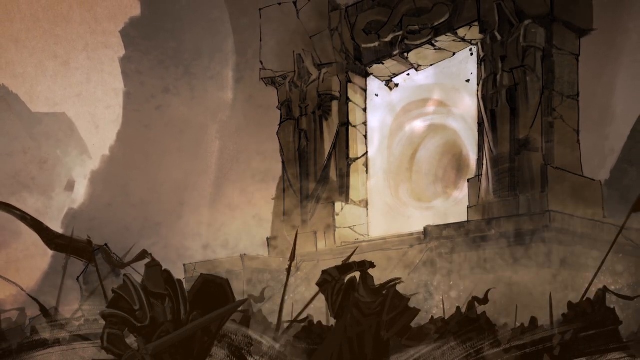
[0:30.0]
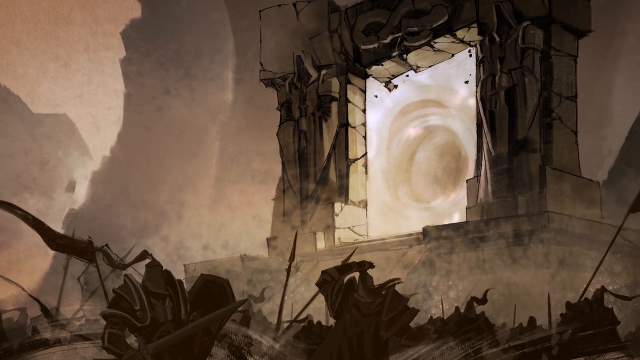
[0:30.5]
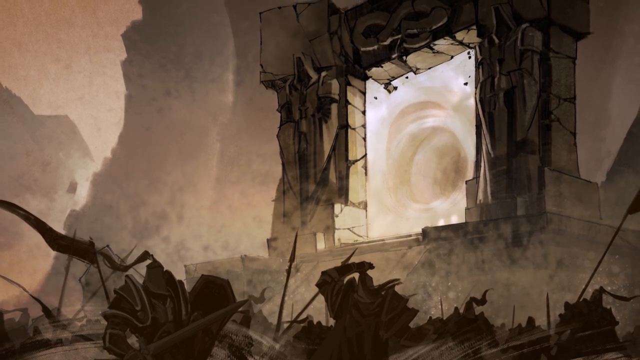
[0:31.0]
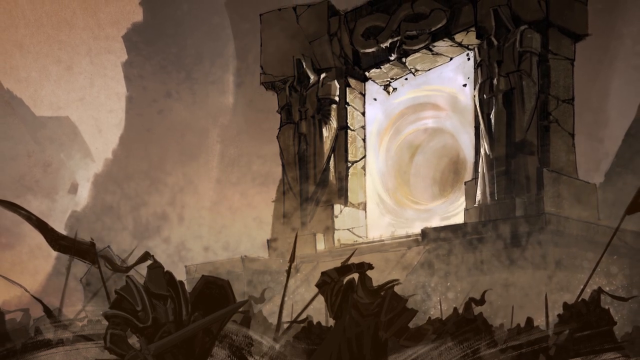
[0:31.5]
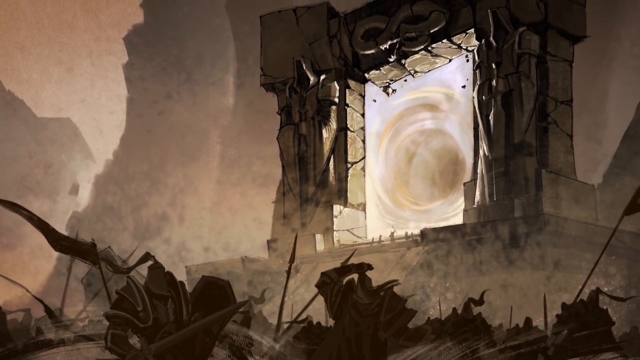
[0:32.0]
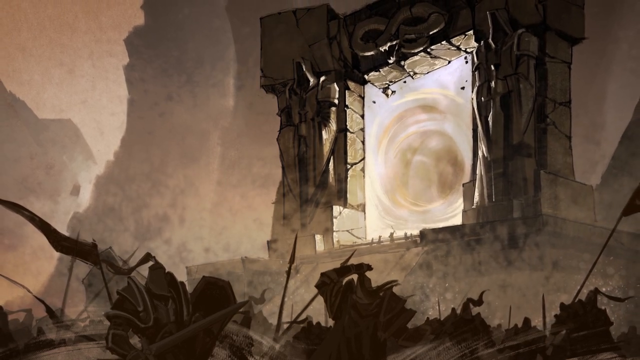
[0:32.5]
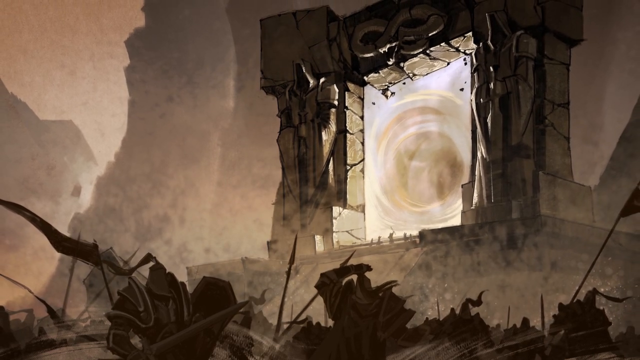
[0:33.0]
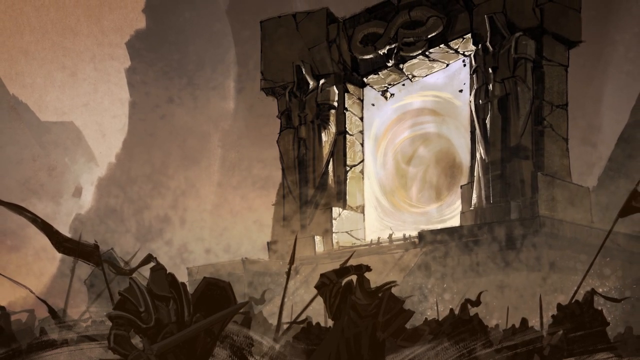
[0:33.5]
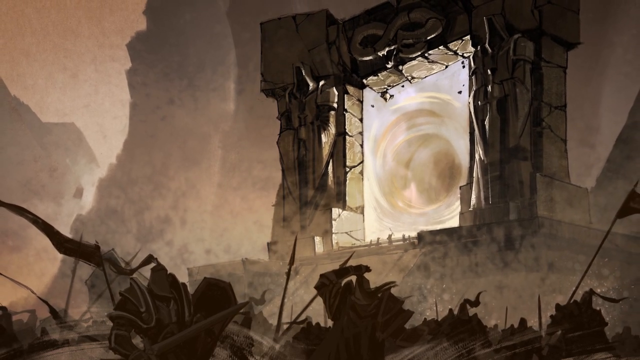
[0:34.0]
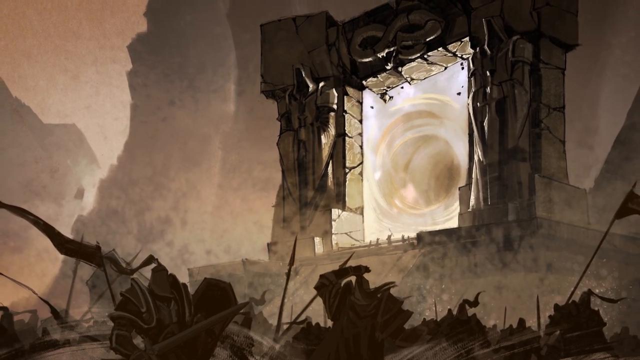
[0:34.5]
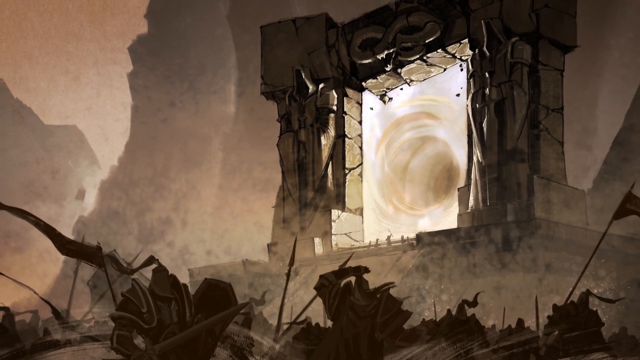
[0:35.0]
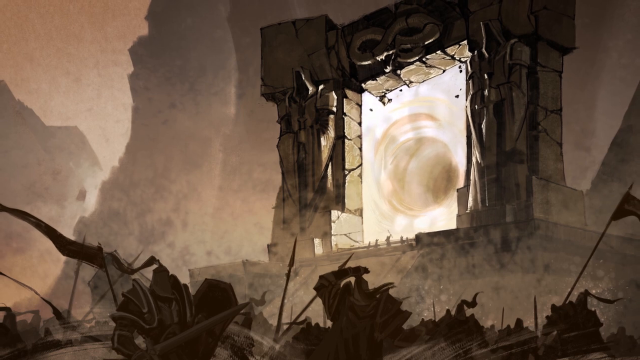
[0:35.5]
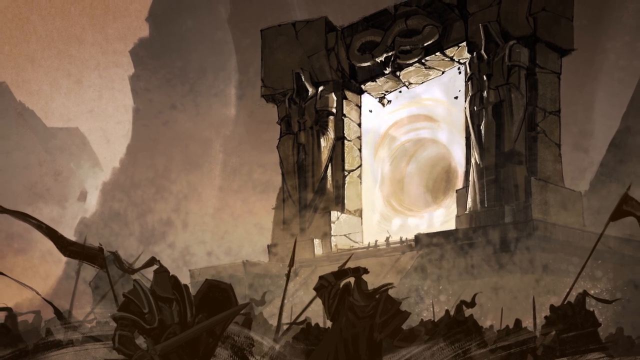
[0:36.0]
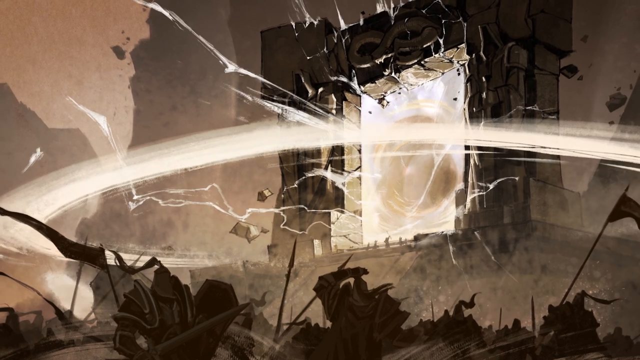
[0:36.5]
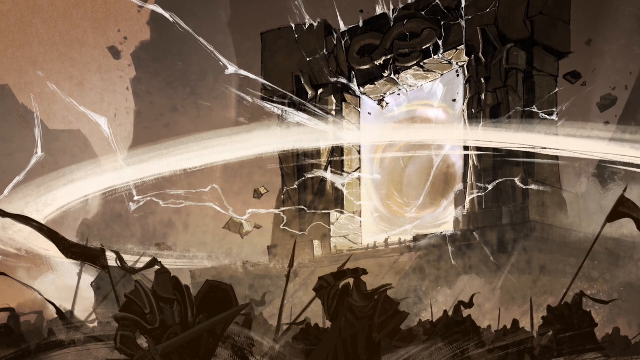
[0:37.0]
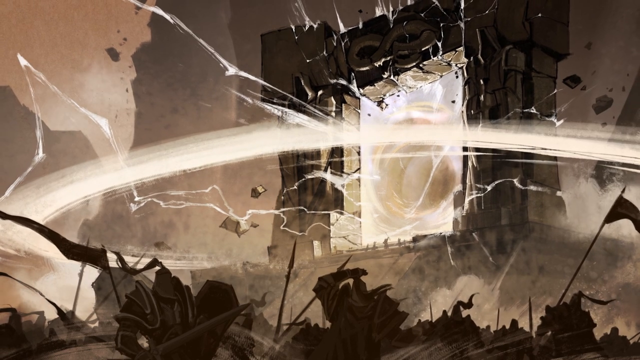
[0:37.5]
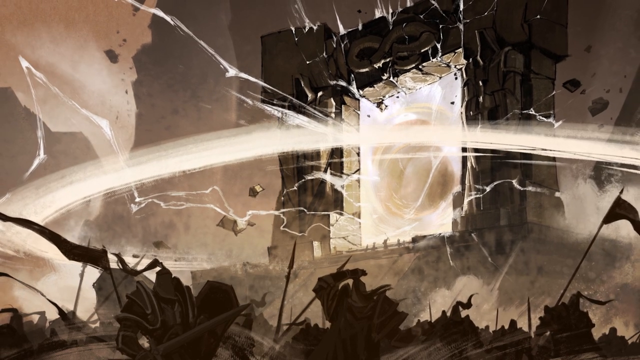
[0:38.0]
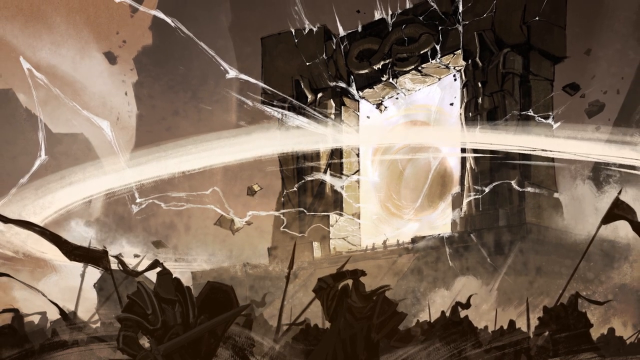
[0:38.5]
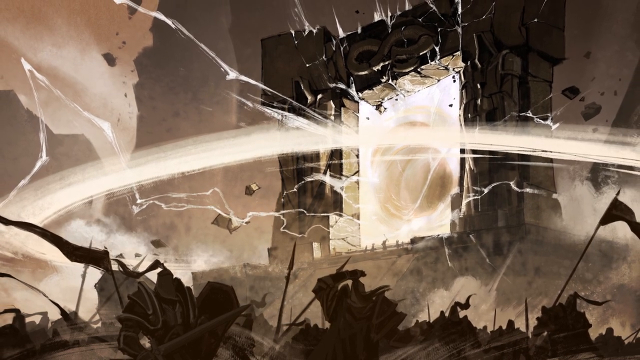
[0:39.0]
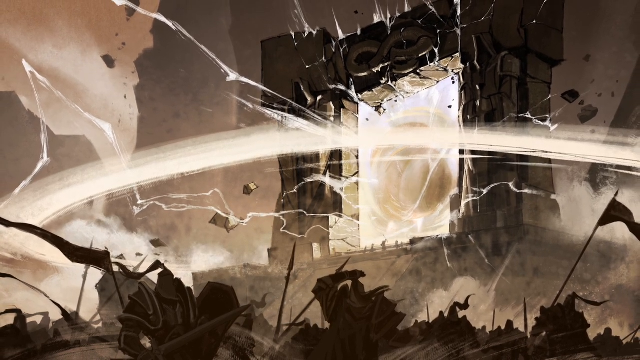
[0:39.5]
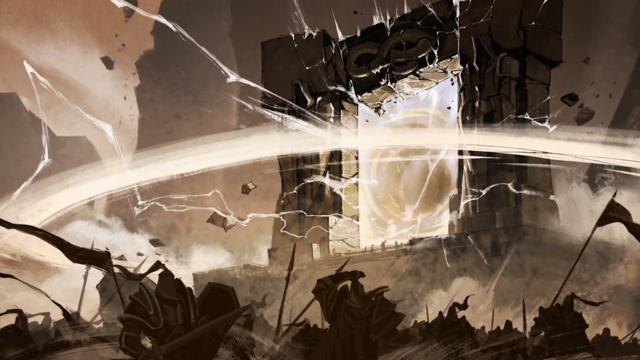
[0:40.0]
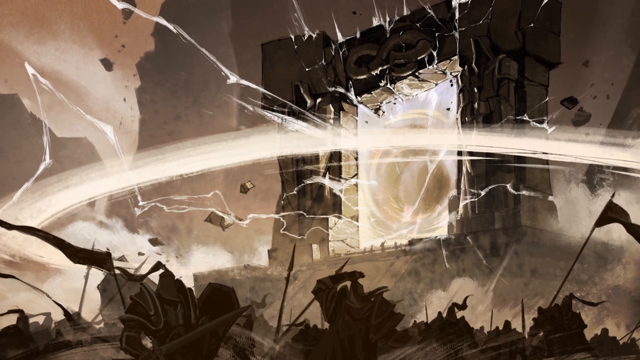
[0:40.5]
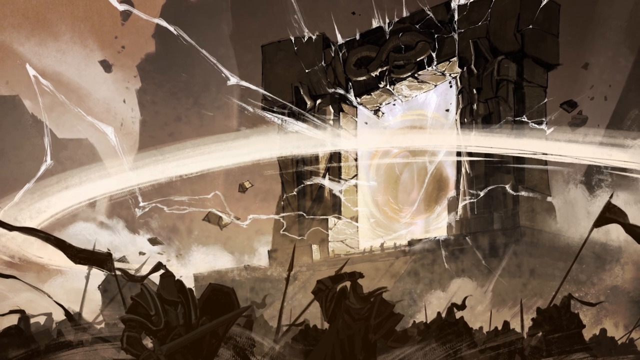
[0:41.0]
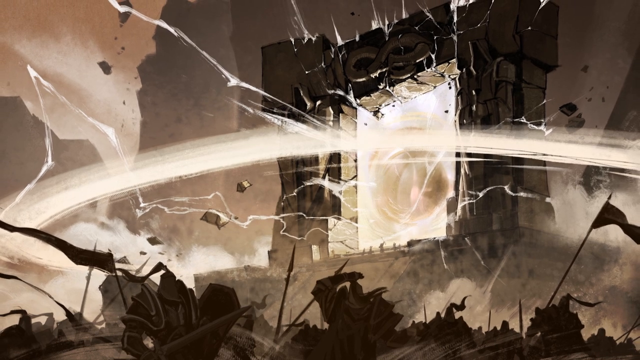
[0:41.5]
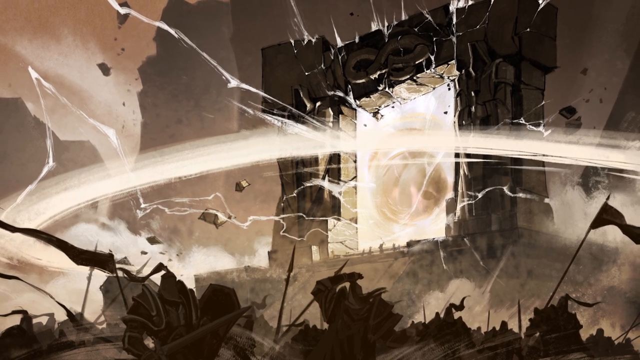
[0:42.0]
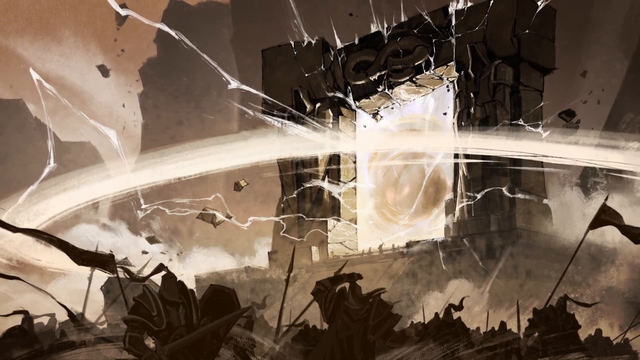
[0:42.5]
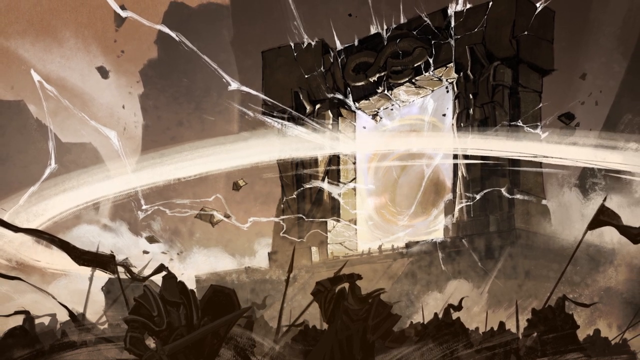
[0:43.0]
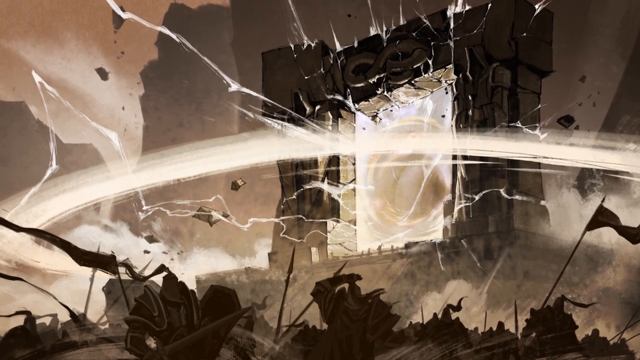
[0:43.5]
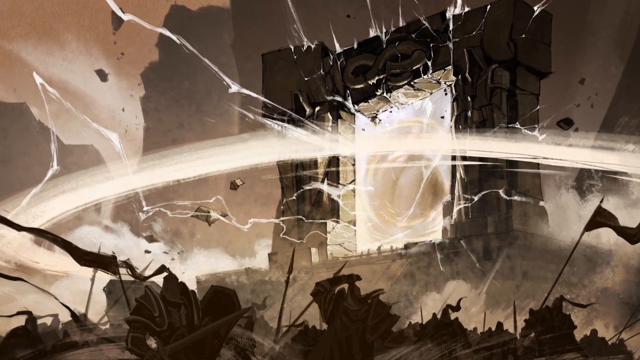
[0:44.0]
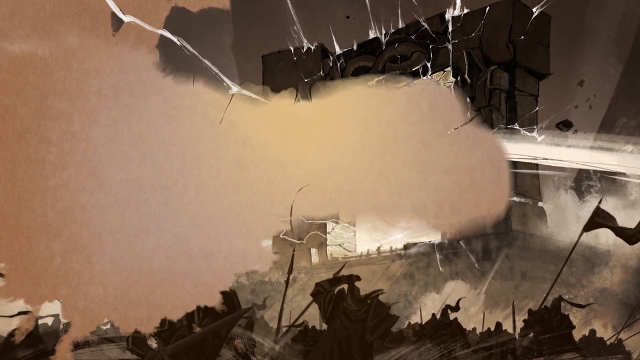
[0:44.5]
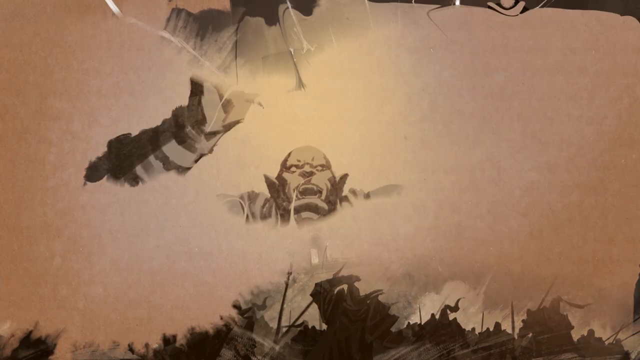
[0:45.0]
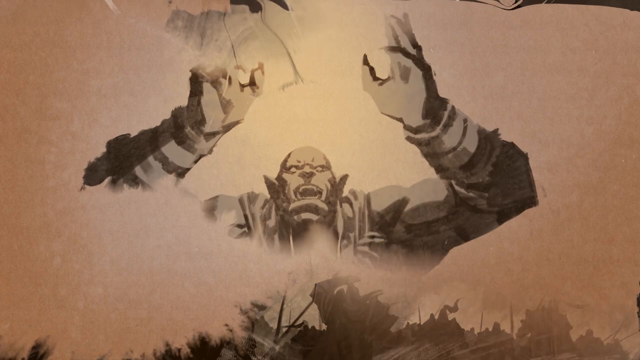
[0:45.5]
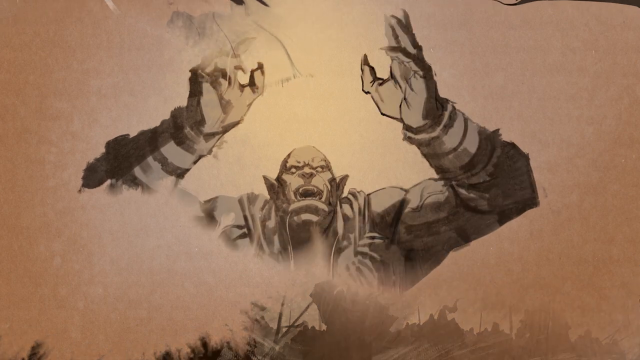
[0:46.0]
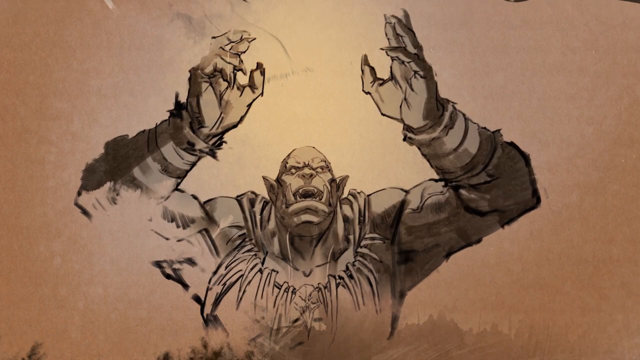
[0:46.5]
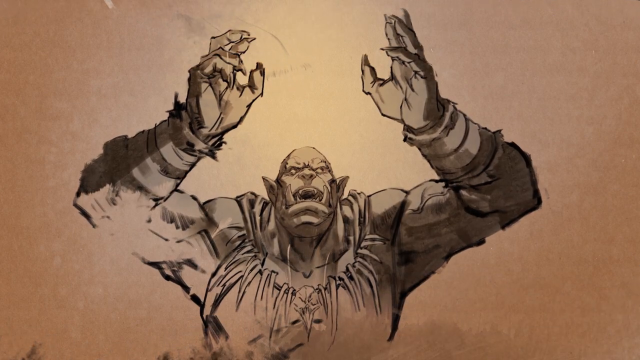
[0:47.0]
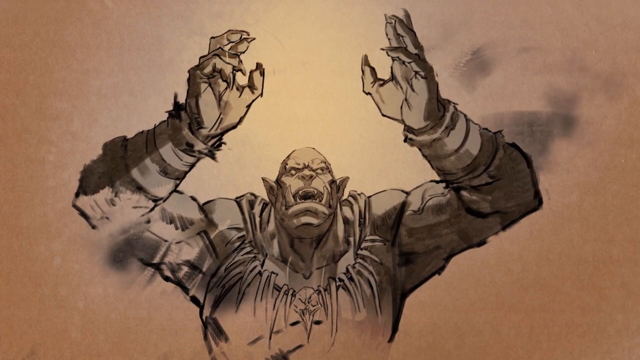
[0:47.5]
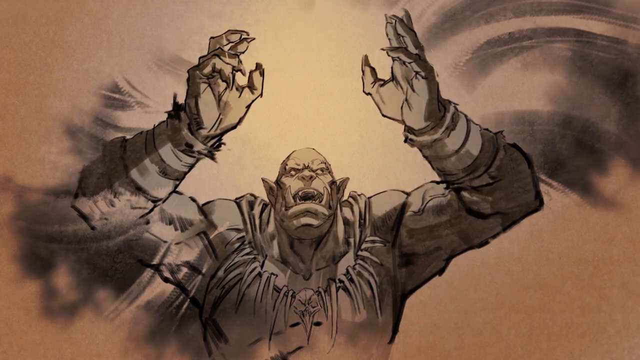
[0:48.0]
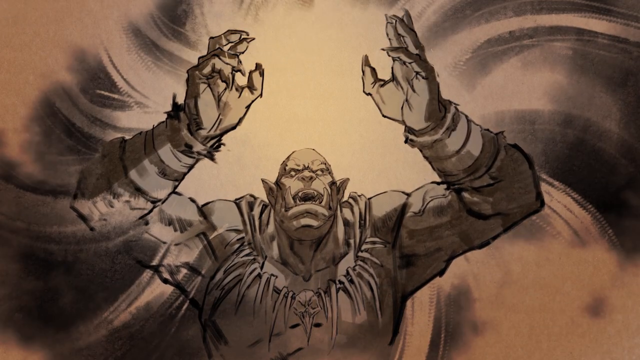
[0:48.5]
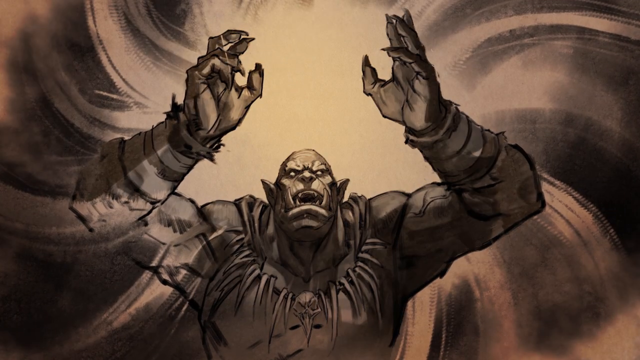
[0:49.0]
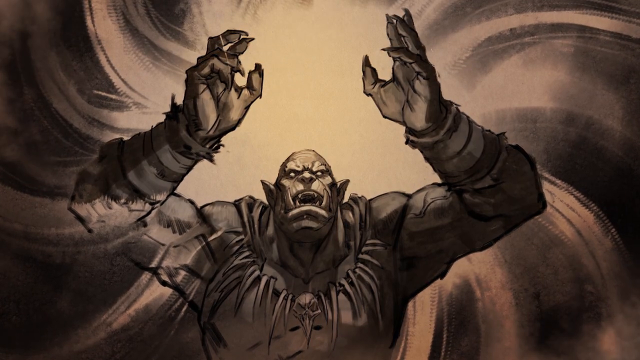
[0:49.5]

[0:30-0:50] The ground view continues, showing people's bodies, their armor and weapons lying on the ground in front of the portal. In the background there is what looks to be mountains and maybe buildings; it is hard to tell because everything is a weird tan color. The portal is still there and still open, but the stone around it looks damaged, cracking in a lot of places. The dragon head at the top in the middle of the portal is now a snake, showing both the body and the head; it looks like the same portal apart from the head. The image zooms out a little, and a slow transition follows in which a circular beam or ray comes out from the portal and the cracks in the portal light up as if it is breaking more, as if the portal has become activated. A sand transition then changes to another image of what is apparently the orc from earlier, who looks like he is praying with his hands up; he may be in shock or being sucked into the portal, though it is hard to tell, but something is happening to him.